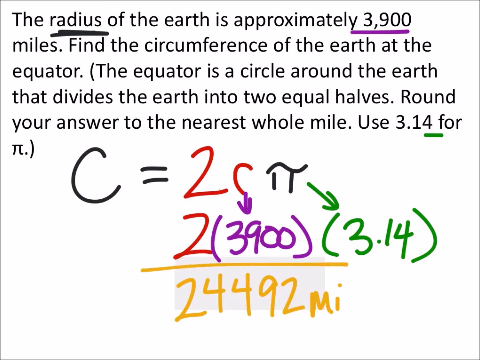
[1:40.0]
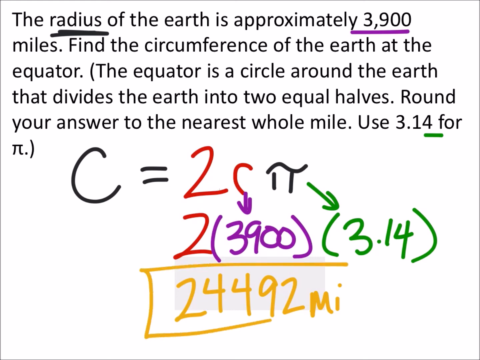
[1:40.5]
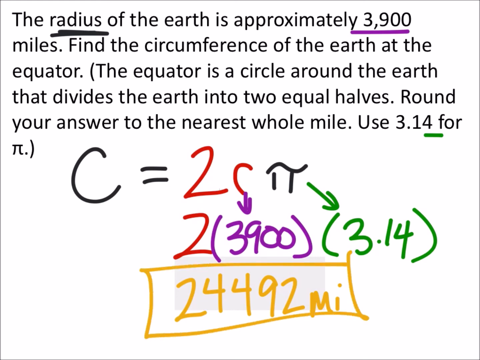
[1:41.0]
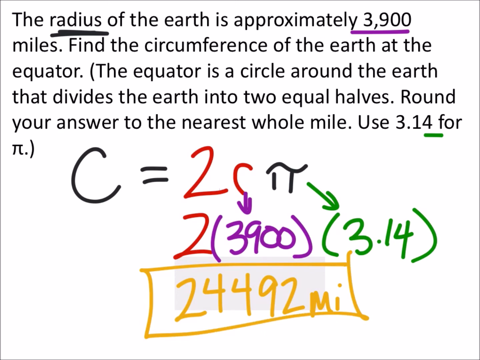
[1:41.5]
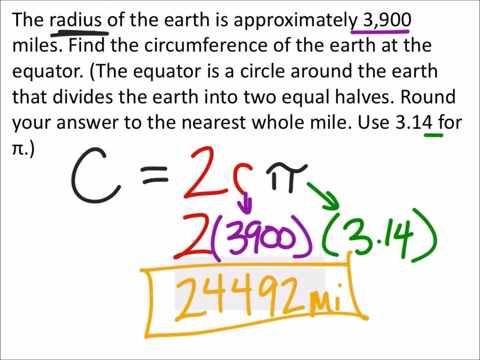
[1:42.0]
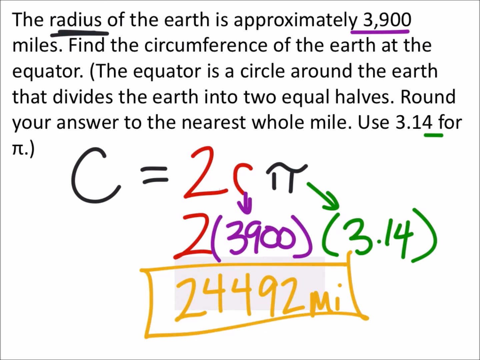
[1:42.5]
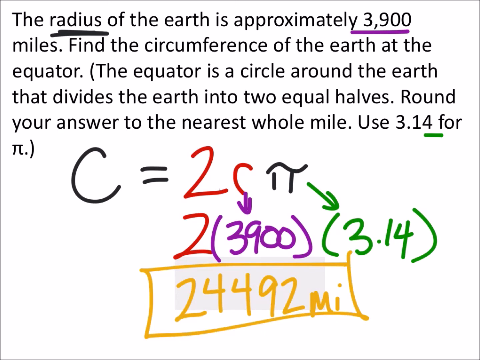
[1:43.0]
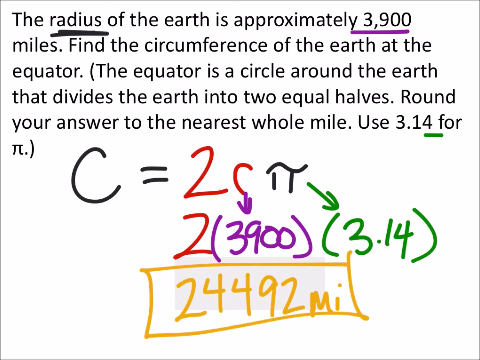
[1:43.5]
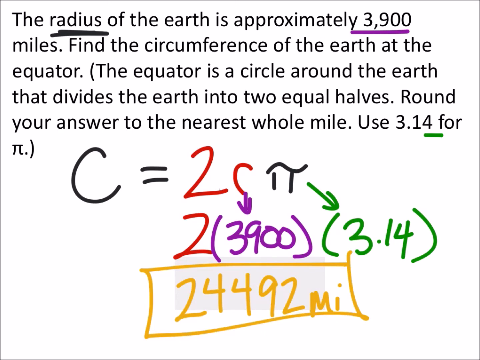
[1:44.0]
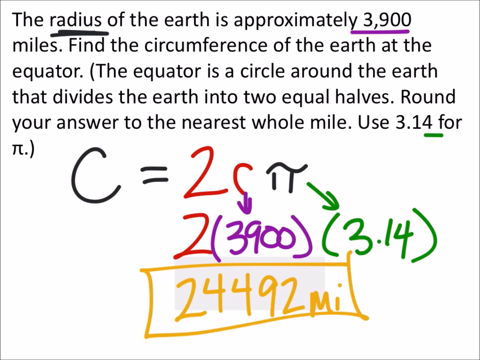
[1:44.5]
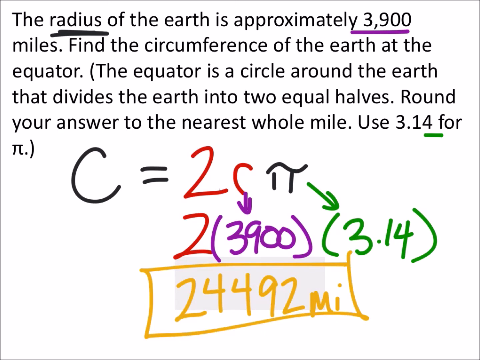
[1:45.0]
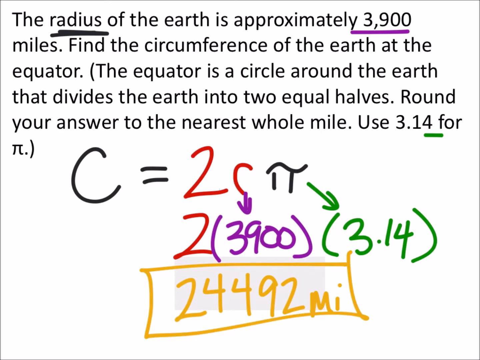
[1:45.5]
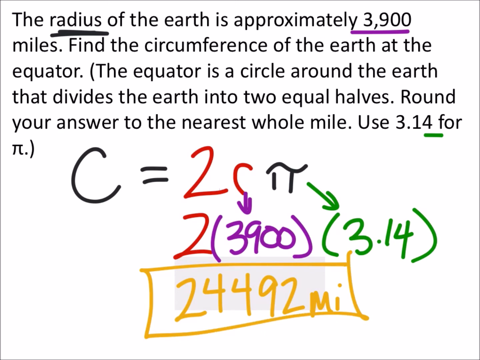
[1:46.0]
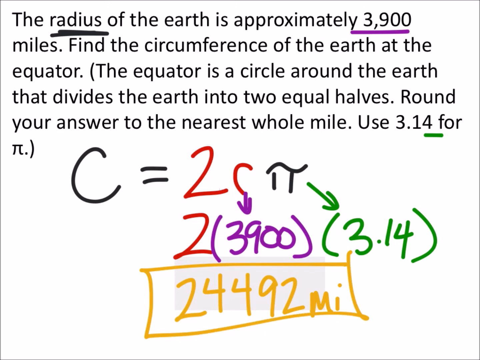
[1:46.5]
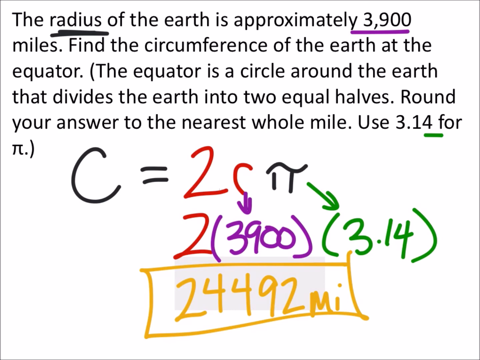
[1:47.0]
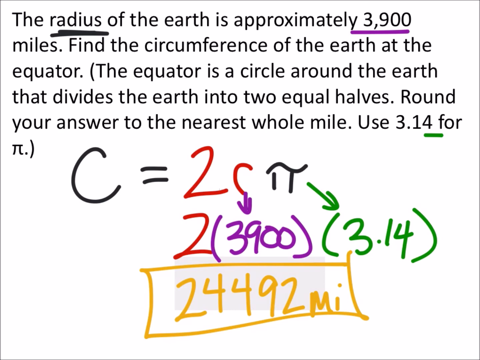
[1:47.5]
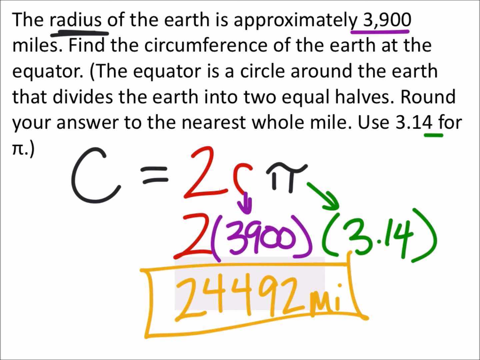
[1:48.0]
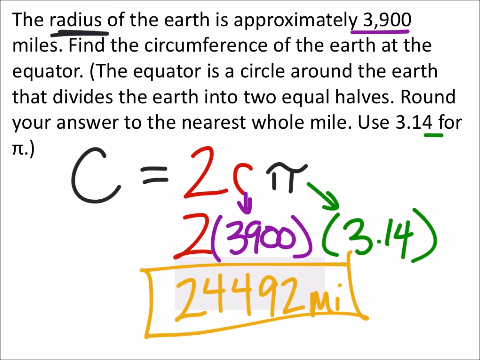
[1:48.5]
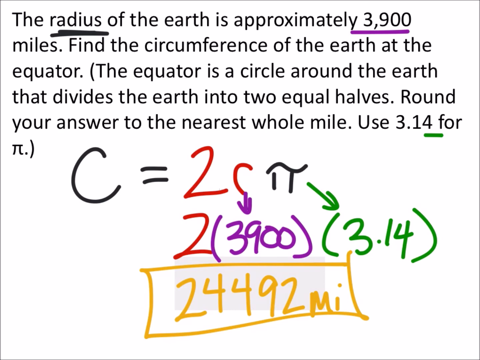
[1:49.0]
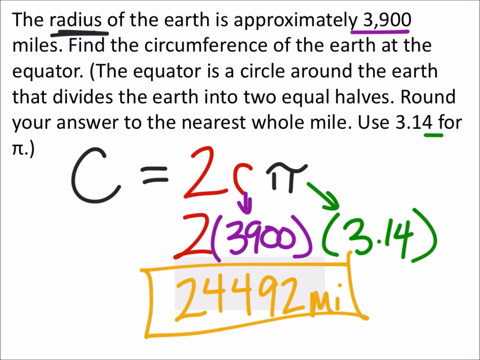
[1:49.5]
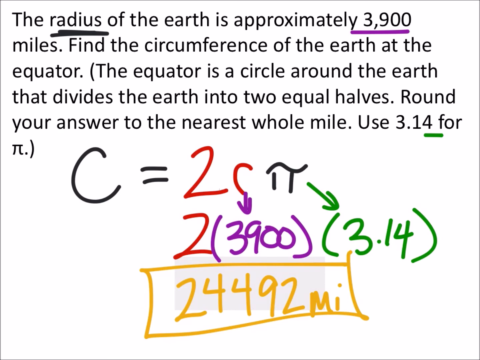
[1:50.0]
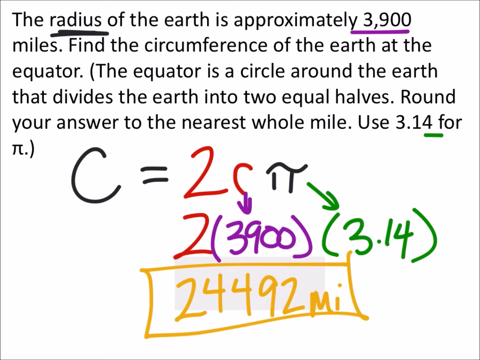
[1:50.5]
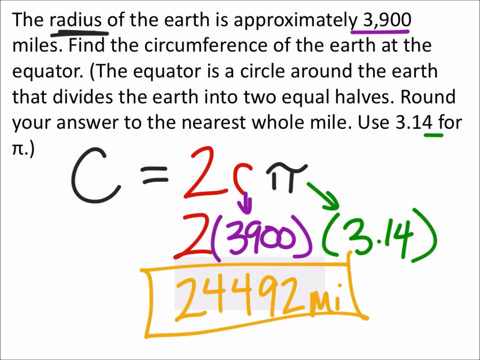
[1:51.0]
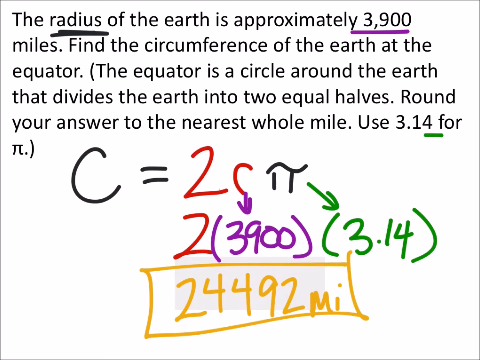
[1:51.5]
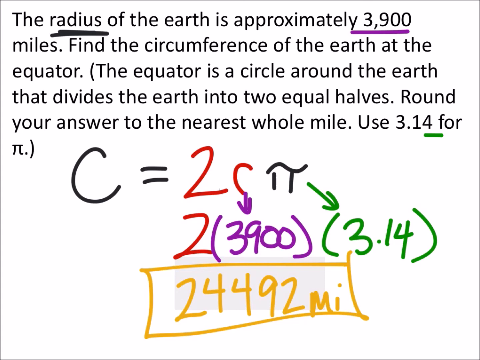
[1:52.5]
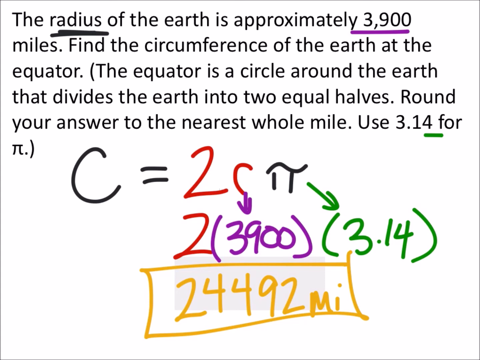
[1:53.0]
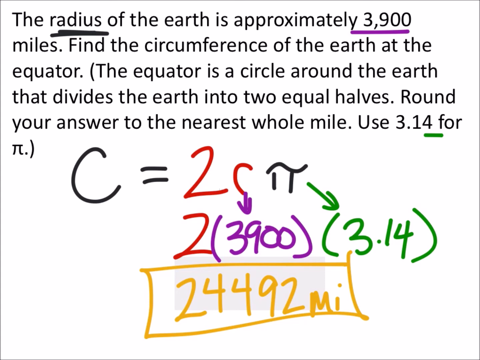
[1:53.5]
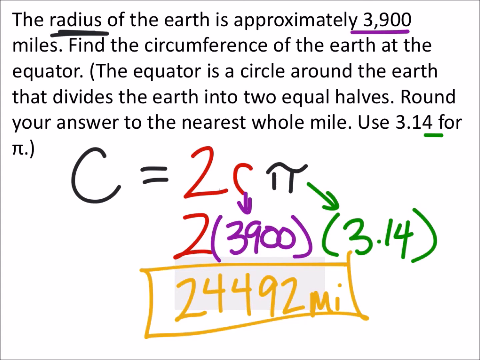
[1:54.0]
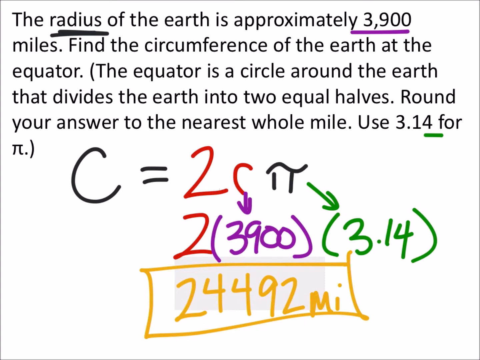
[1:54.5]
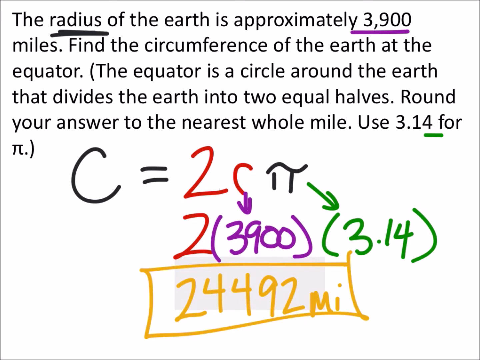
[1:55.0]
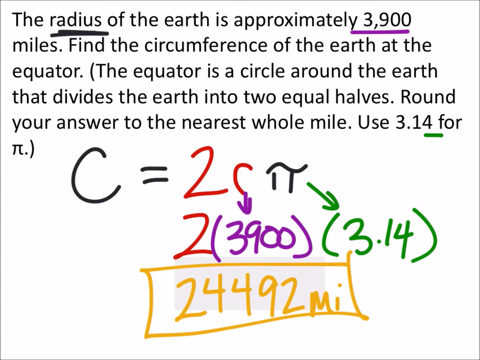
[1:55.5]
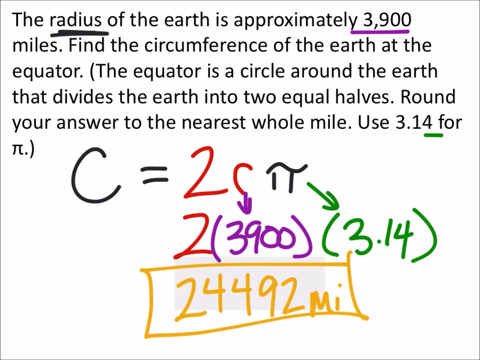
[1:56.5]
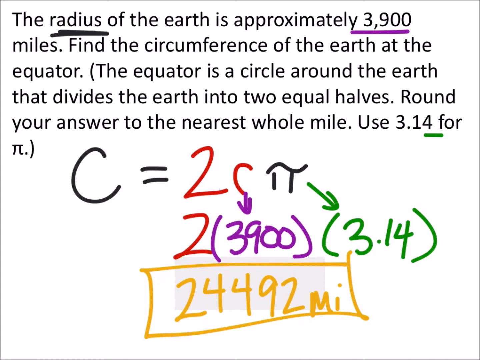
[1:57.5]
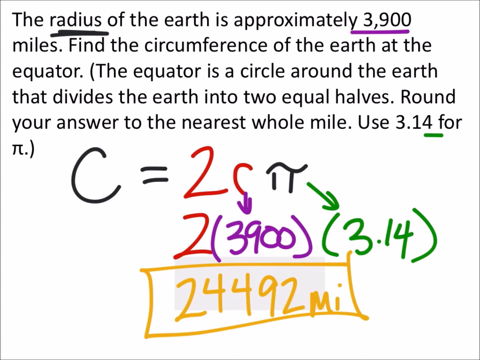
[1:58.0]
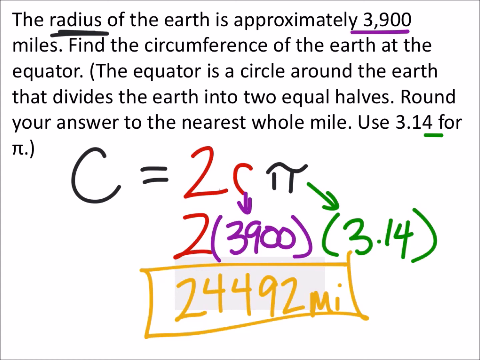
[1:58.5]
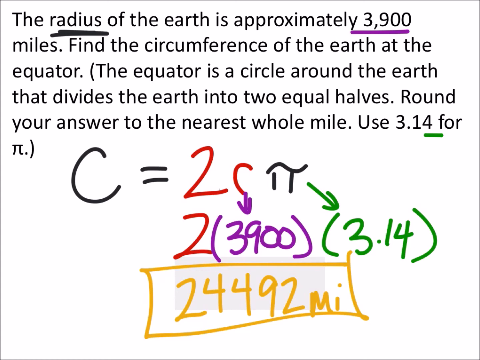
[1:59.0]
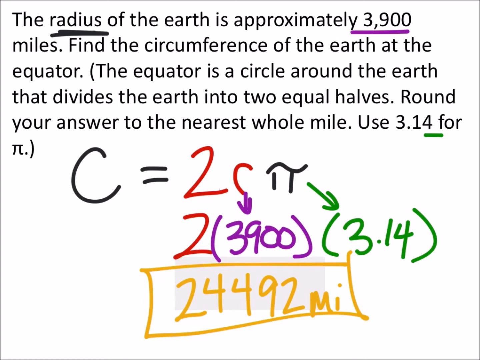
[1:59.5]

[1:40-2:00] Apparently from a class assignment in a mathematical or science class, the problem is shown on a solid white background: "The radius of the Earth is approximately 3,900 miles. Find the circumference of the Earth at the equator. The equator is a circle around the Earth that divides the Earth into two equal halves. Round your answer to the nearest whole mile. Use 3.14 for pi." No school, class, student names or other names appear. On the lower half of the screen, the student's handwriting, made with some type of pad device or mouse, appears in colorful text. It reads C equals 2C pi; below that, 2 and 3,900 in parentheses, and to the right of that, 3.14 in parentheses. The answer, 24,492 miles, is now outlined in yellow.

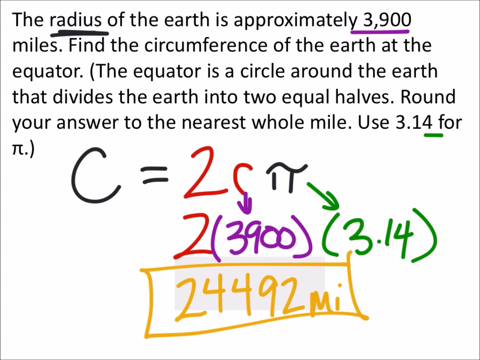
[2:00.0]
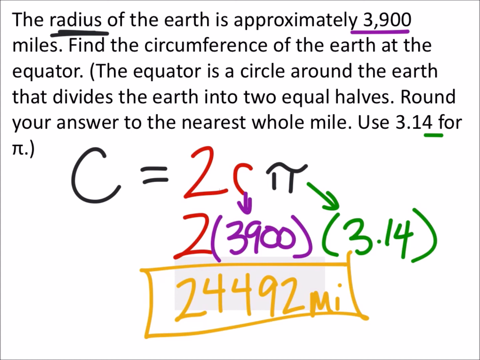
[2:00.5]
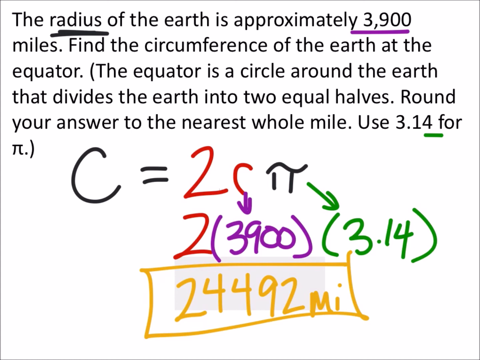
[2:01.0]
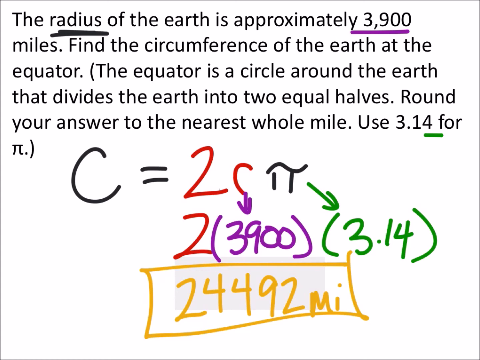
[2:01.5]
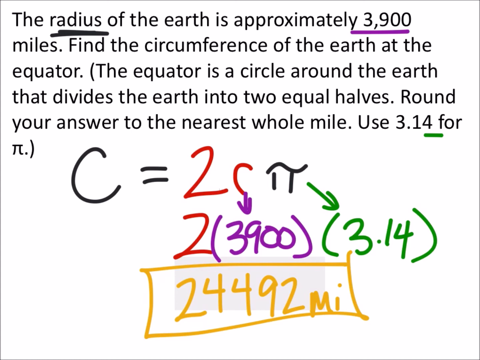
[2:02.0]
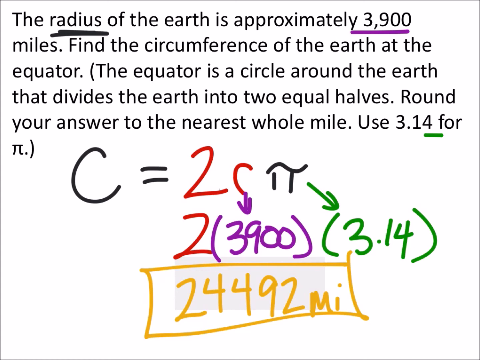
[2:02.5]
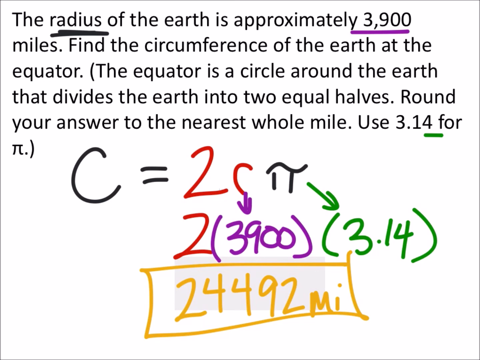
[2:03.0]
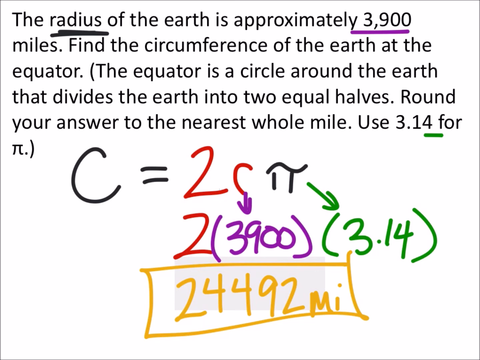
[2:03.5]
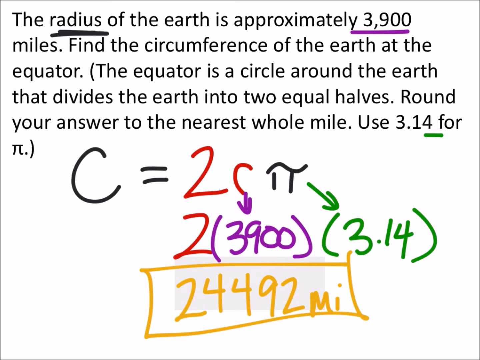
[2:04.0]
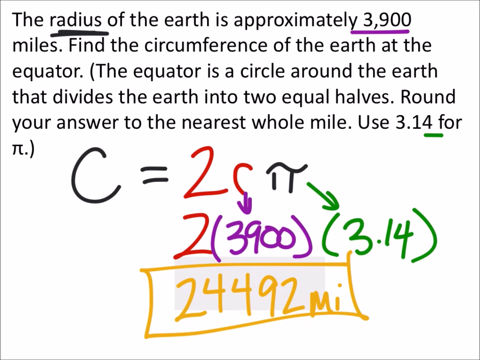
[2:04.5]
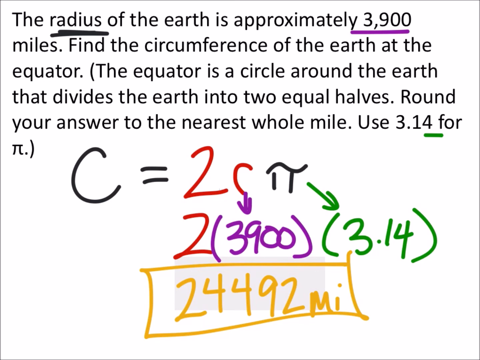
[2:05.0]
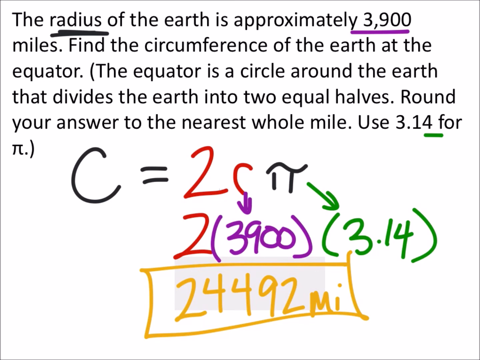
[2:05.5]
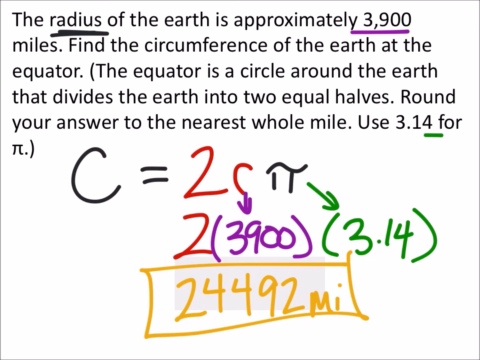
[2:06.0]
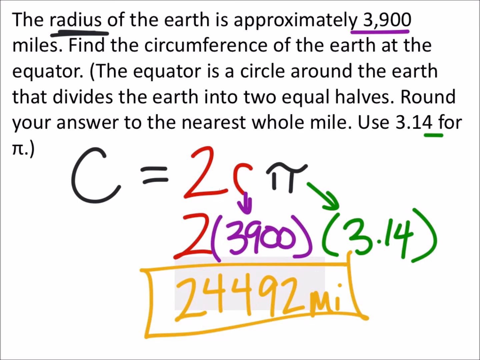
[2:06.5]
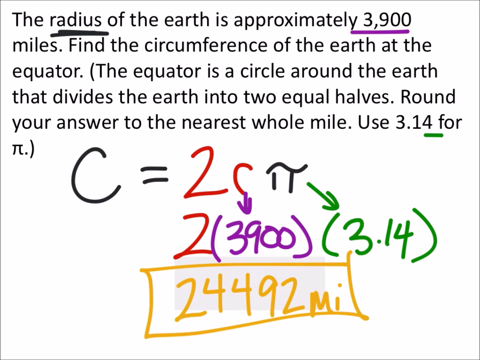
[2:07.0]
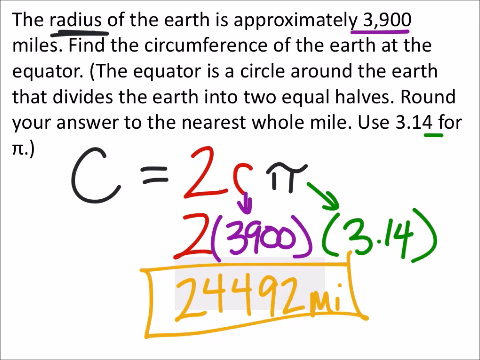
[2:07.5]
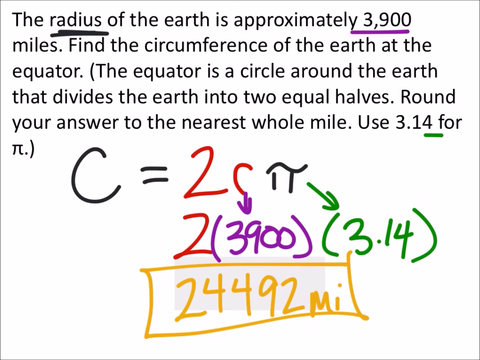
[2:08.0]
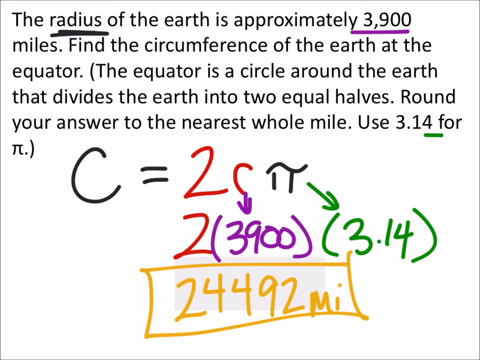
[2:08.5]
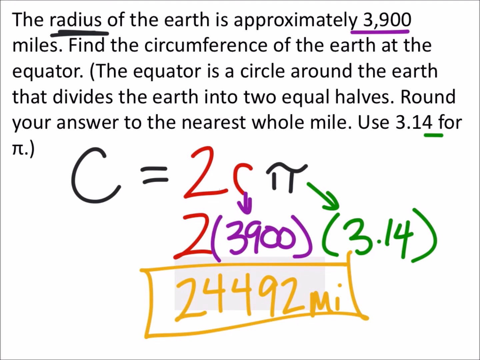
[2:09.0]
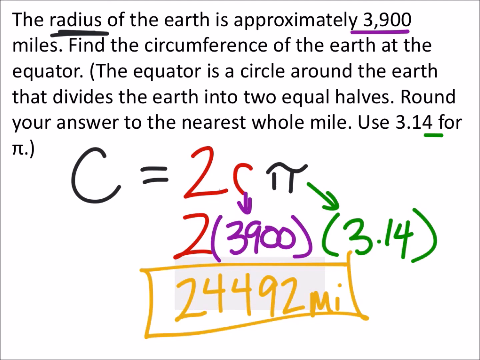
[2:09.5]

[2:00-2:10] A student is figuring out the answer to a mathematical problem, possibly from a math or a science class; no school, teacher or student is shown. The problem reads: "The radius of the Earth is approximately 3,900 miles. Find the circumference of the Earth at the equator. (The equator is a circle around the Earth that divides the Earth into two equal halves.) Round your answer to the nearest whole mile. Use 3.14 for pi." The words radius, 3,900 and 3.14 are underlined, and the working is handwritten below against the white background, with the solution being 24,492 miles.